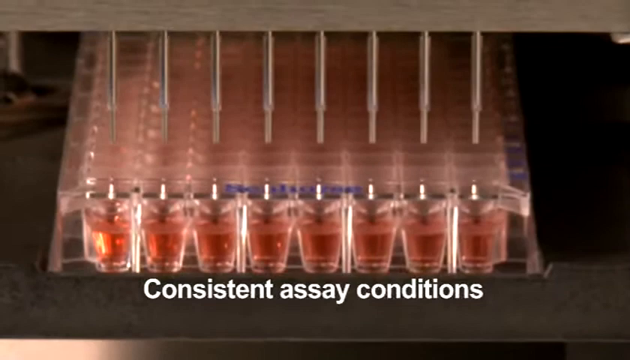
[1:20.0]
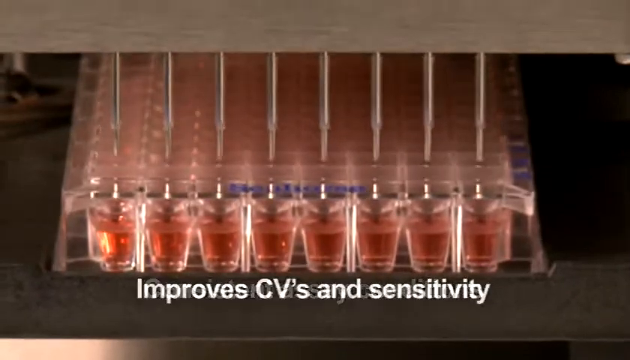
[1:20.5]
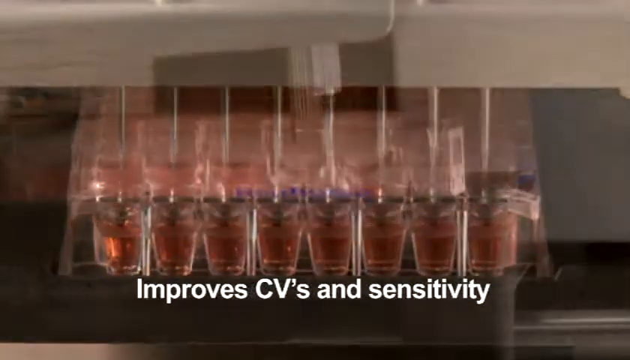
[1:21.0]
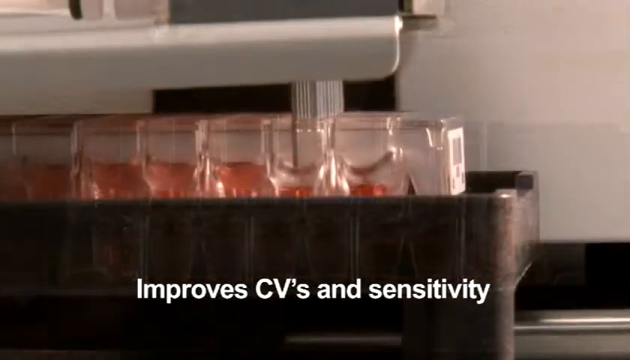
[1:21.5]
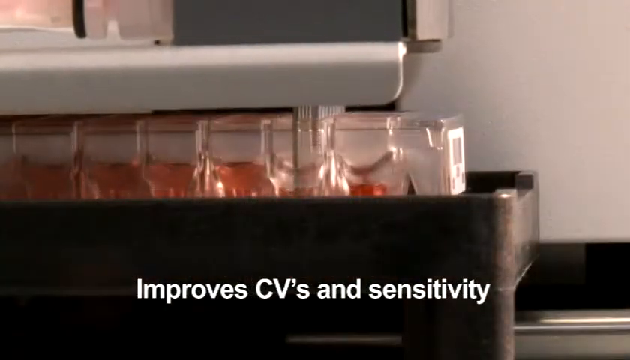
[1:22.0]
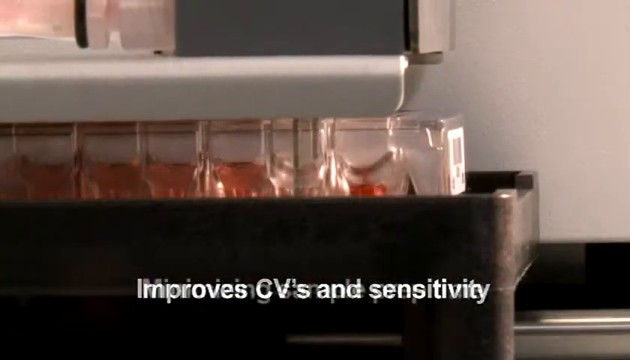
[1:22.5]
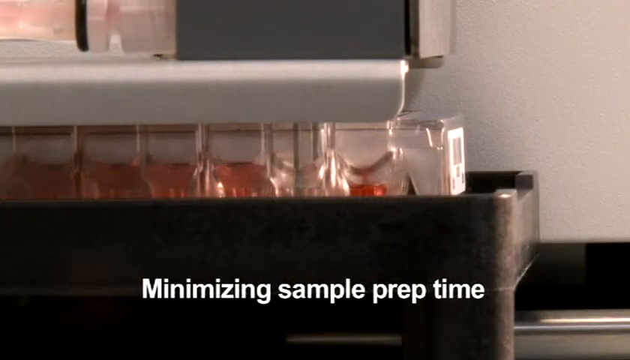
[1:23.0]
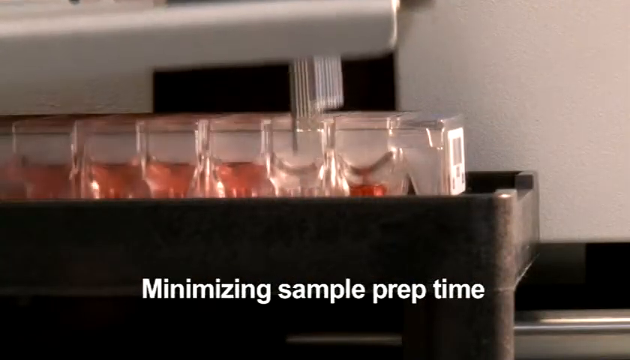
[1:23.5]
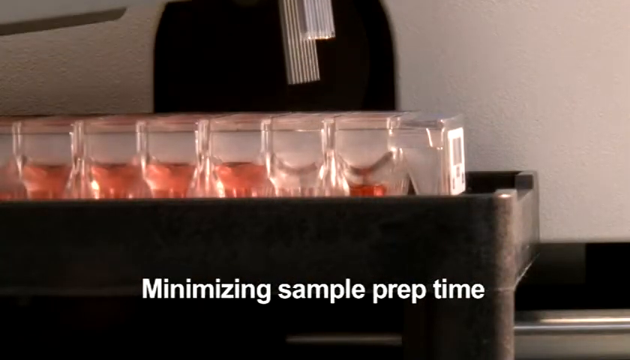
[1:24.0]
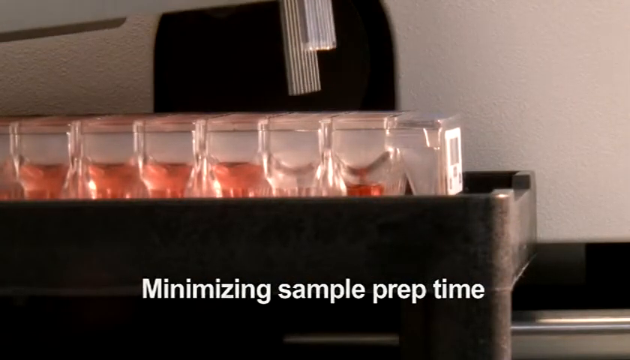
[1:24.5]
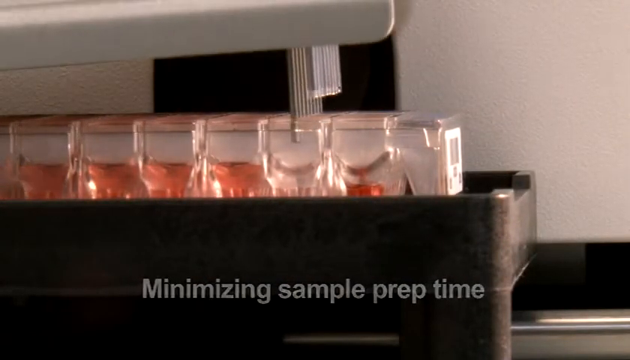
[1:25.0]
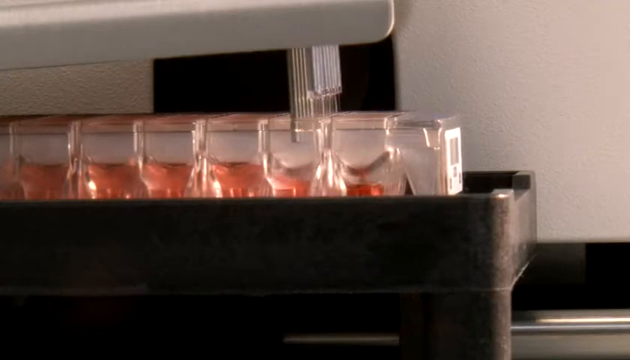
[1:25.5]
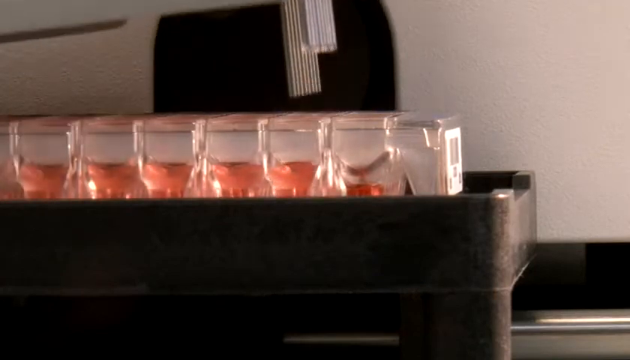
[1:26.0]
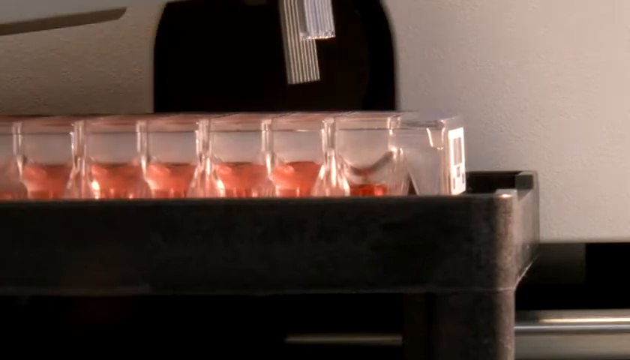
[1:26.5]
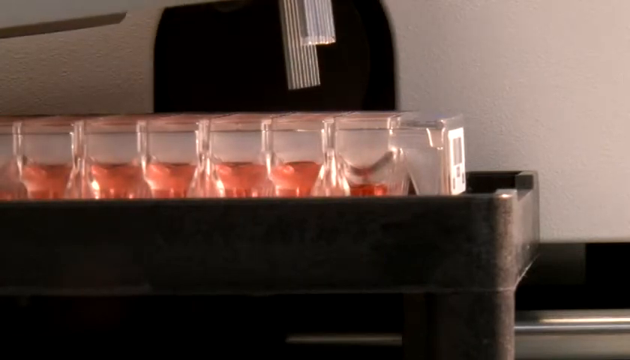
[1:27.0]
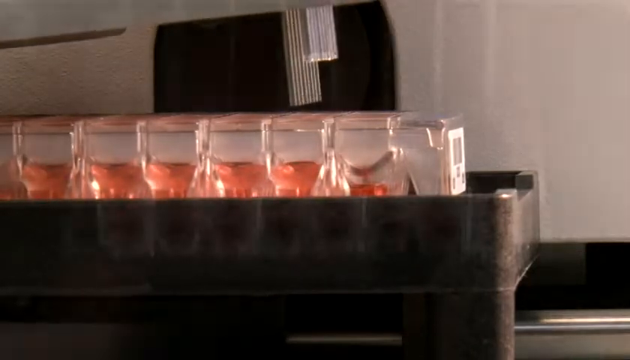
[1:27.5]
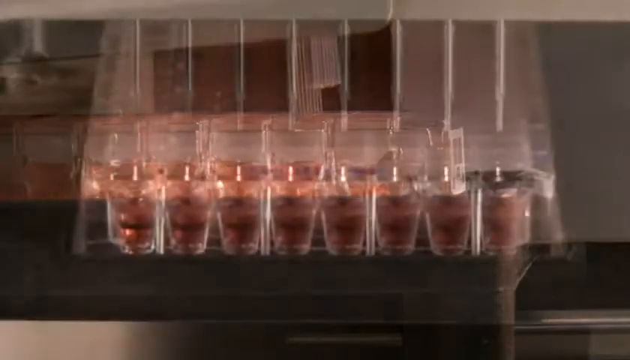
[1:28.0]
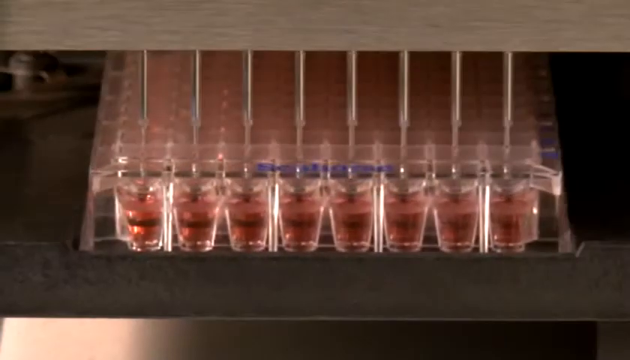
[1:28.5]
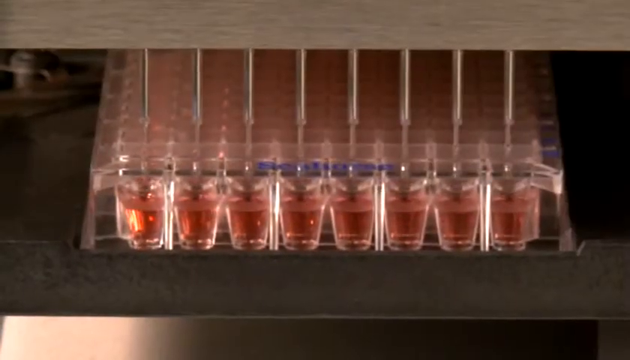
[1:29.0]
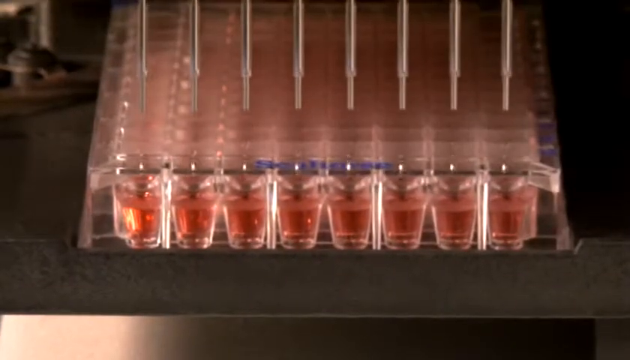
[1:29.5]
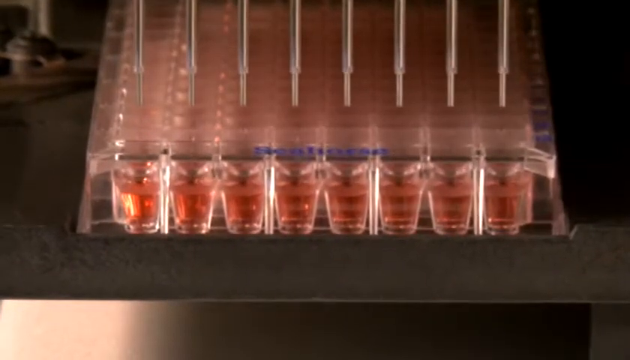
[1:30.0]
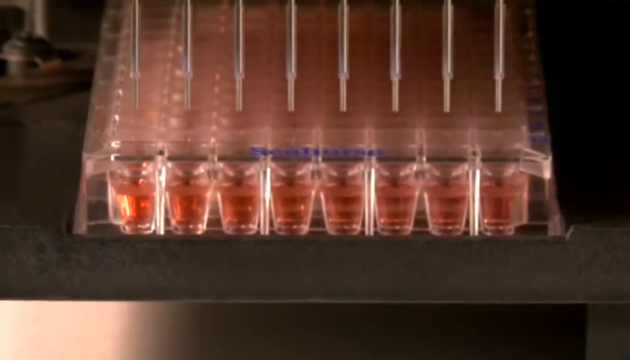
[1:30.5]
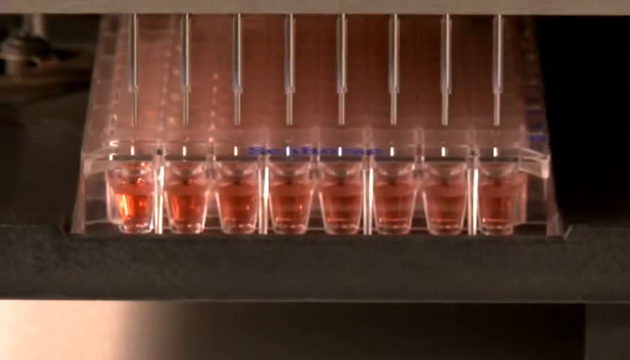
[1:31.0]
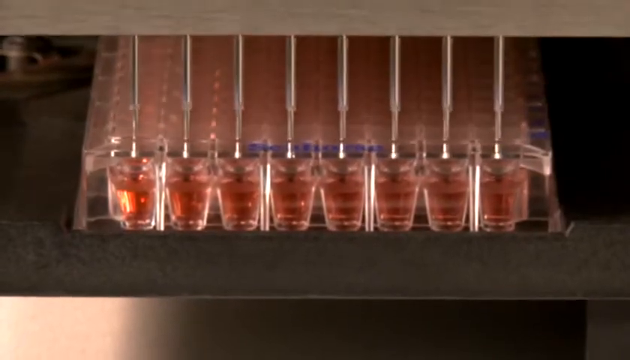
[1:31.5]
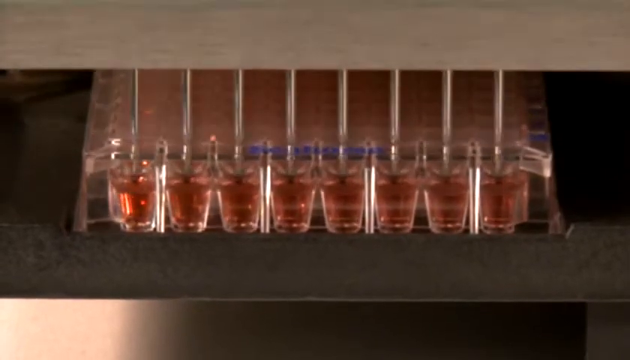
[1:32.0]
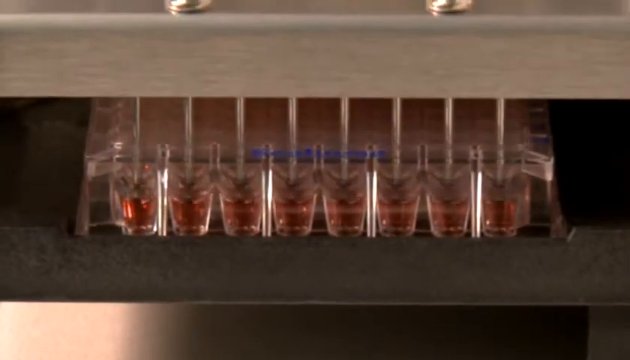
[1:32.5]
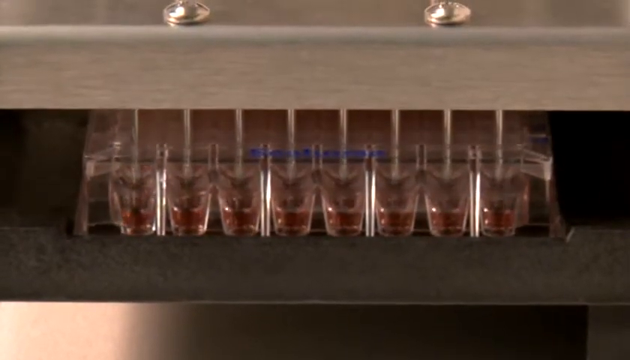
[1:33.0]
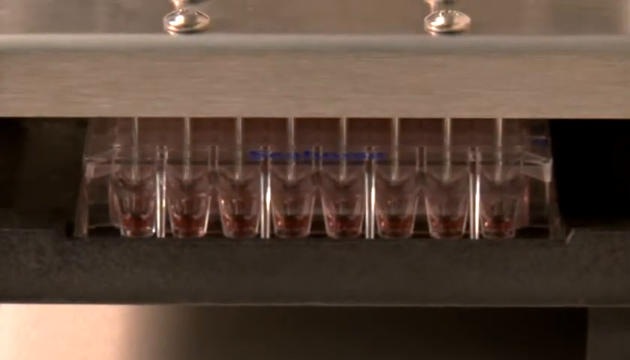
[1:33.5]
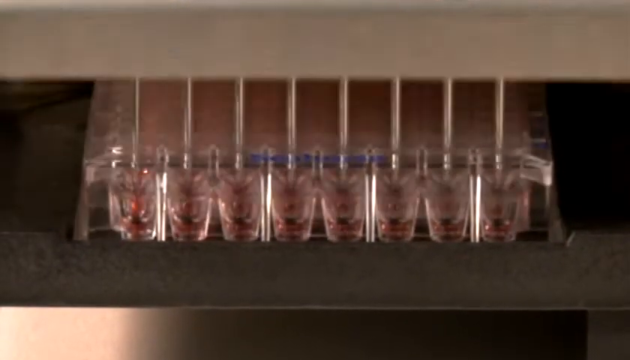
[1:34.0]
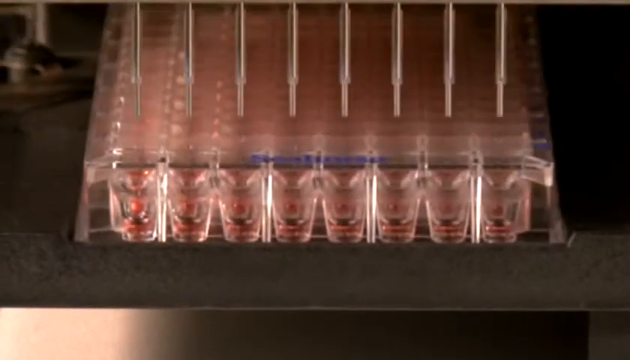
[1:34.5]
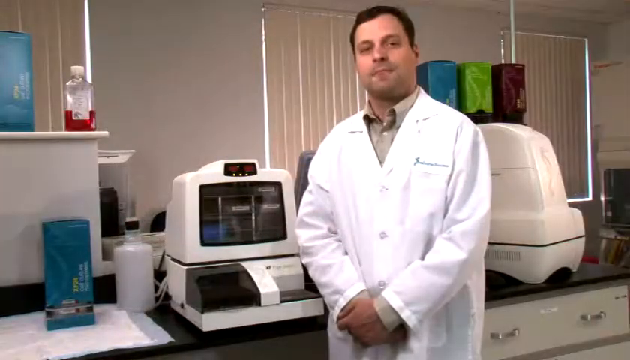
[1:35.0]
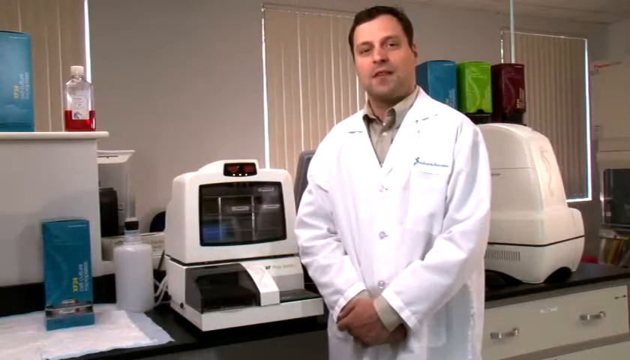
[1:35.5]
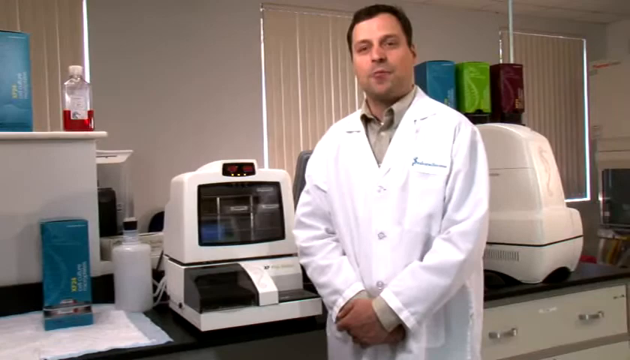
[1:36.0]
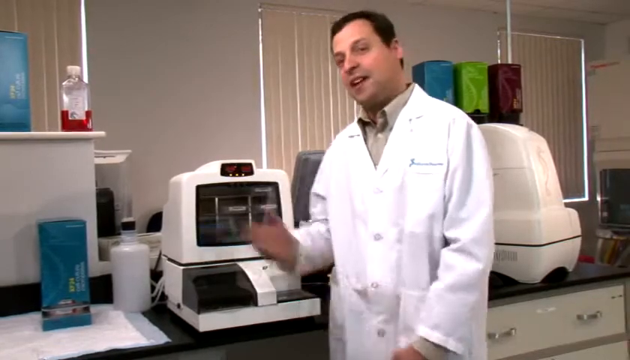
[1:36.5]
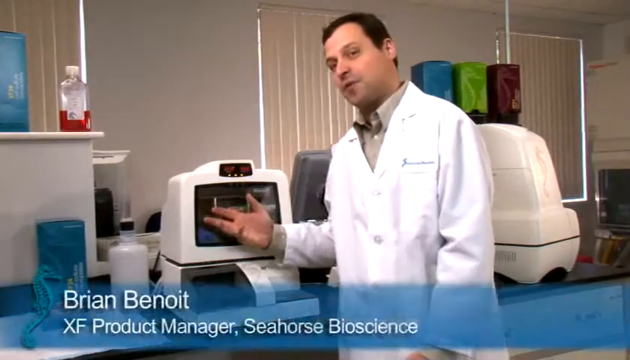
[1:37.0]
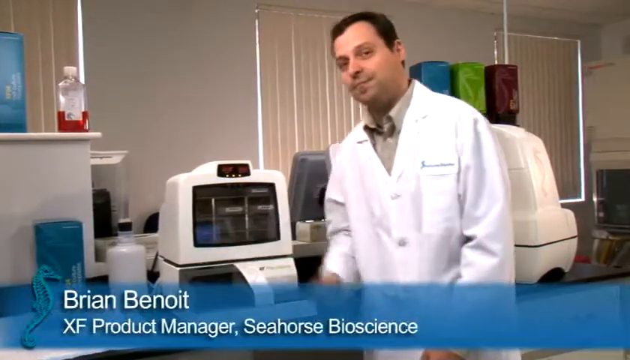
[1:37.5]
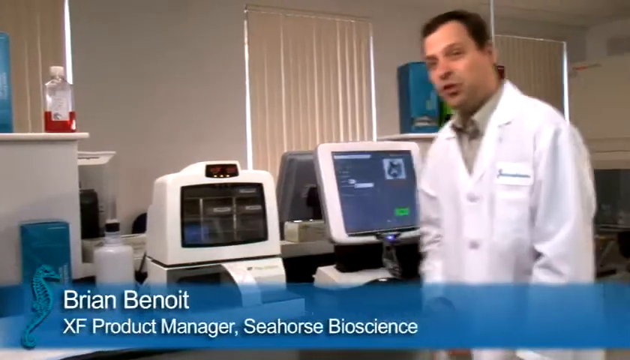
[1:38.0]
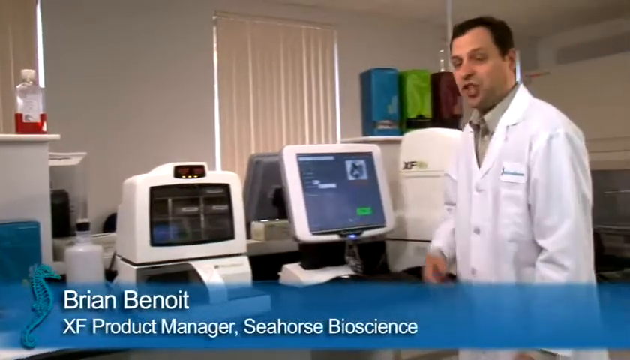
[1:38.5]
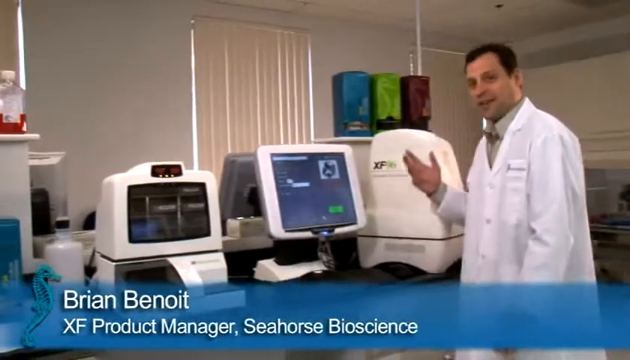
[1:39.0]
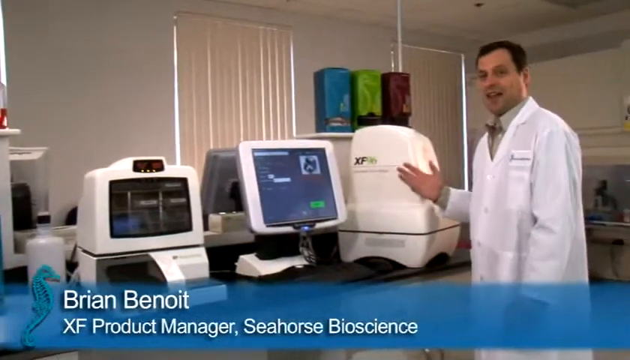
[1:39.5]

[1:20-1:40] A machine prepares samples using multiple pipettes, about eight at a time, attached to the machine's arm. The samples are a reddish clear liquid in small plastic containers attached together 8 in a row, with several rows attached together forming a matrix of samples. Text across the bottom of the screen says "improves CVs and sensitivity". The machine arm lowers and dips eight pipettes simultaneously into the samples. White text across the bottom of the screen says "minimizing sample prep time". The machine with the multiple pipettes simultaneously pours, soaks up liquid from a sample and squirts it into different containers. Next, a man in a white lab coat talks as he points to two machines with his right hand.